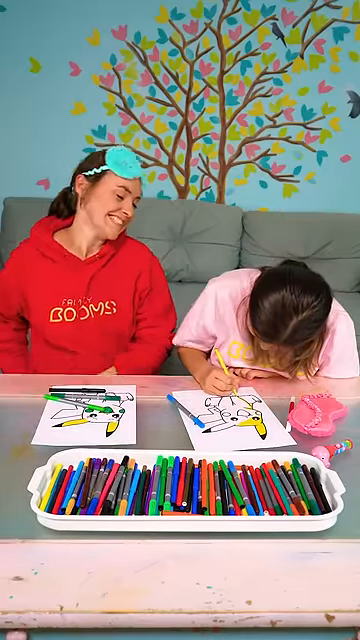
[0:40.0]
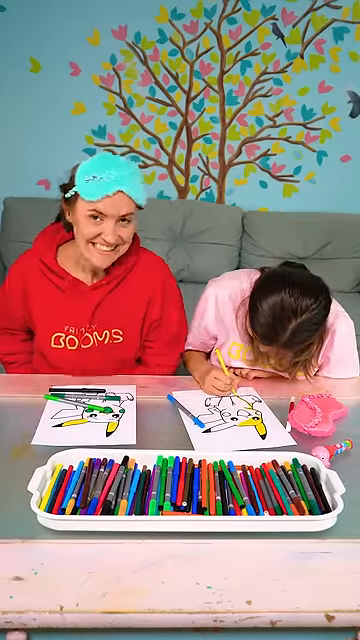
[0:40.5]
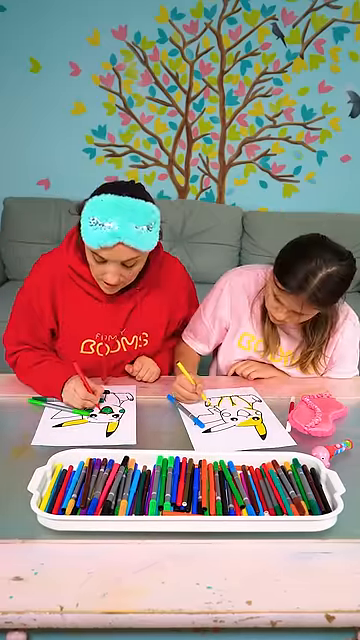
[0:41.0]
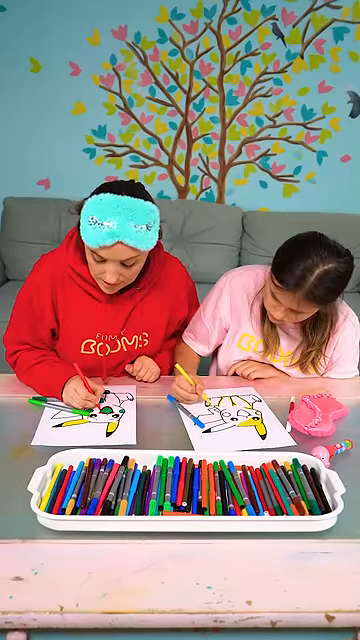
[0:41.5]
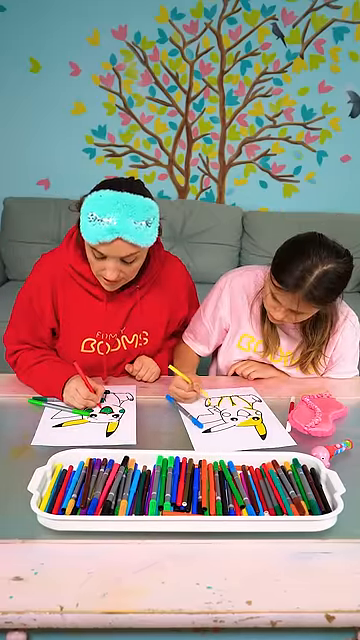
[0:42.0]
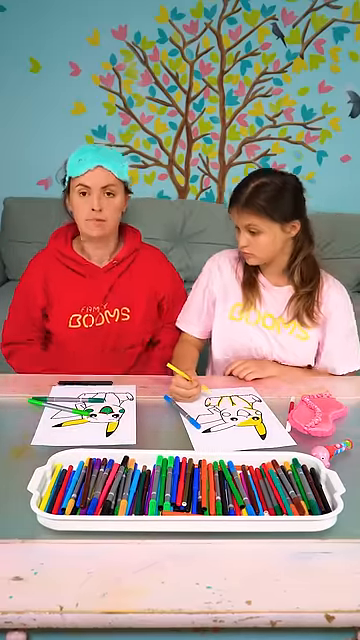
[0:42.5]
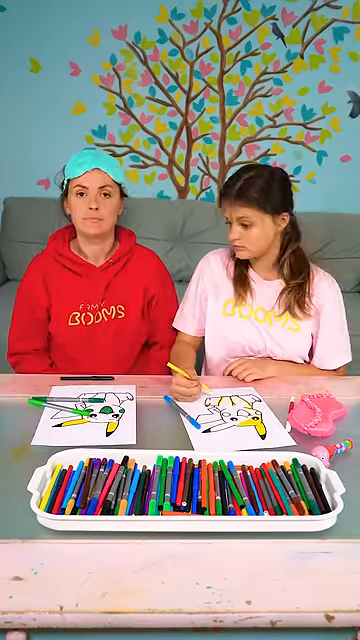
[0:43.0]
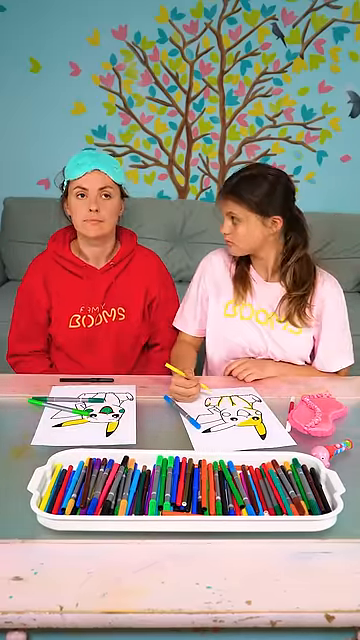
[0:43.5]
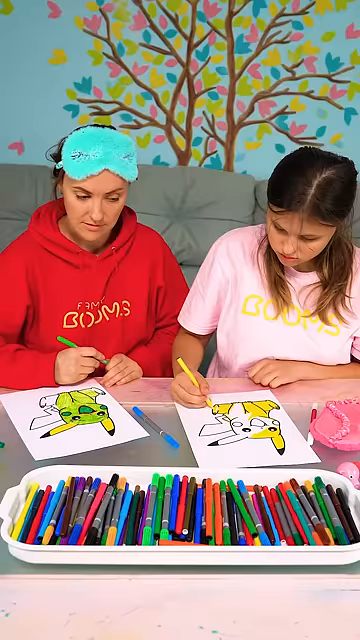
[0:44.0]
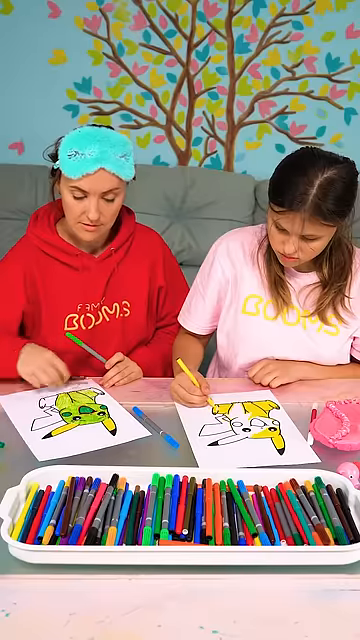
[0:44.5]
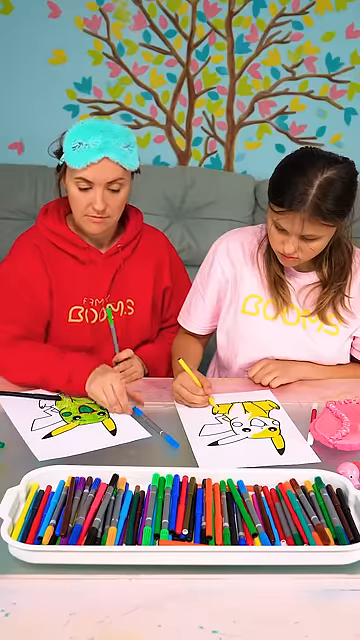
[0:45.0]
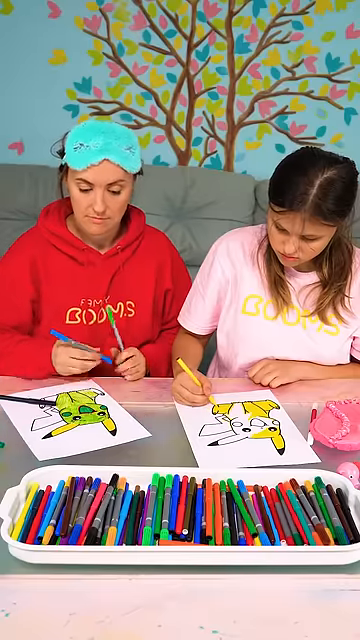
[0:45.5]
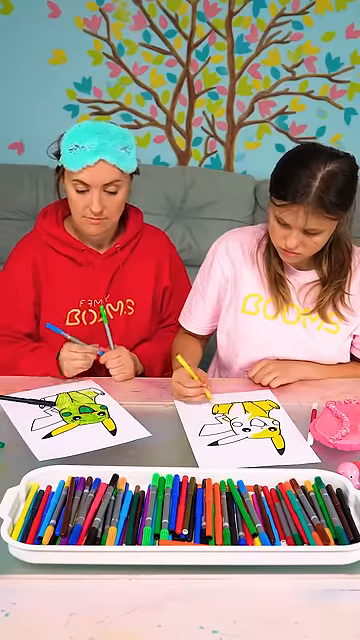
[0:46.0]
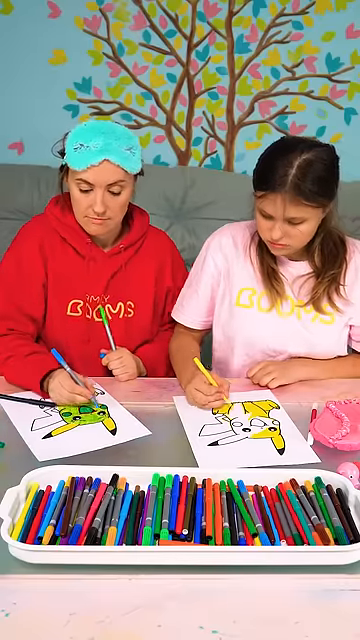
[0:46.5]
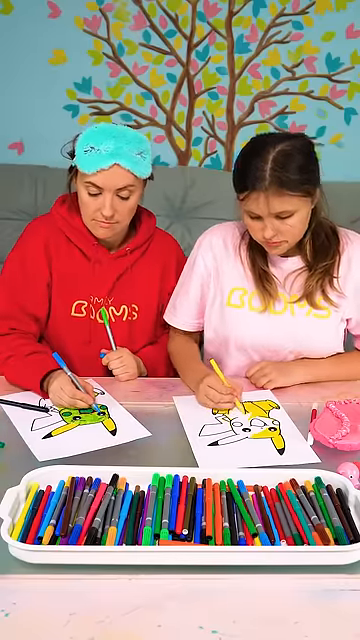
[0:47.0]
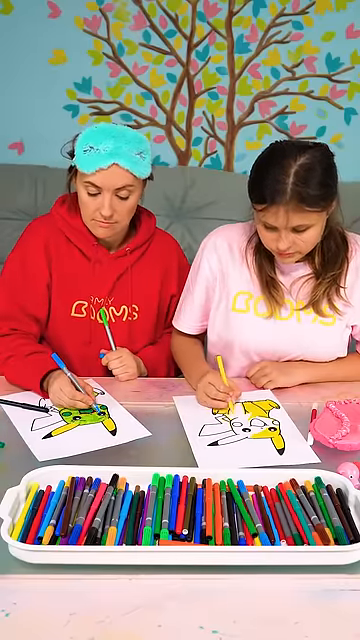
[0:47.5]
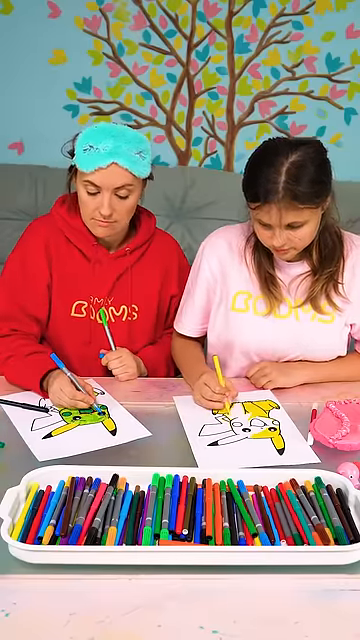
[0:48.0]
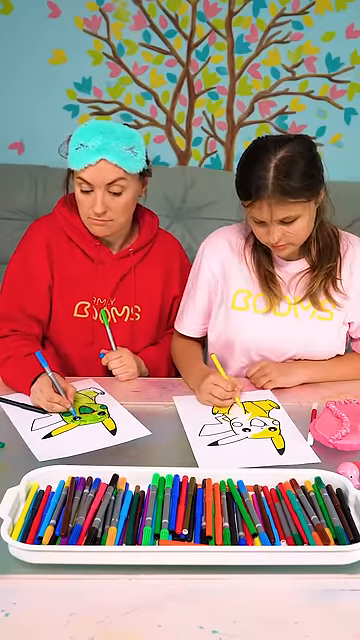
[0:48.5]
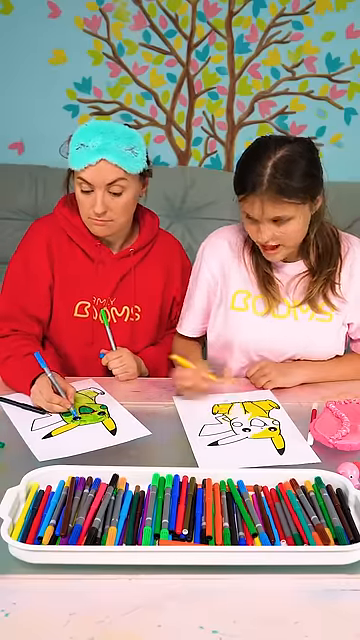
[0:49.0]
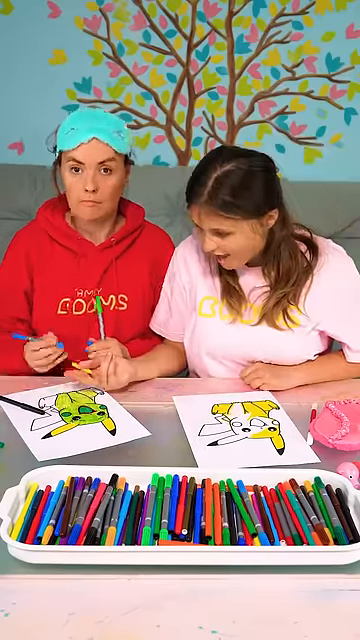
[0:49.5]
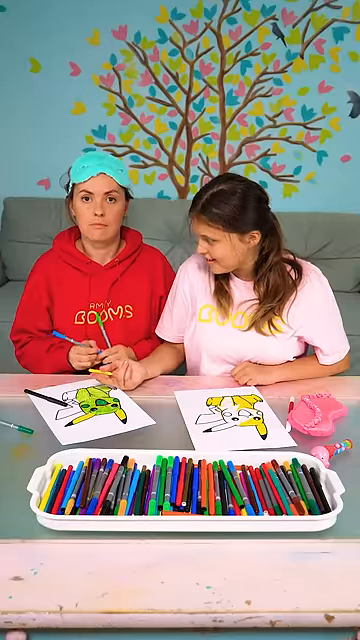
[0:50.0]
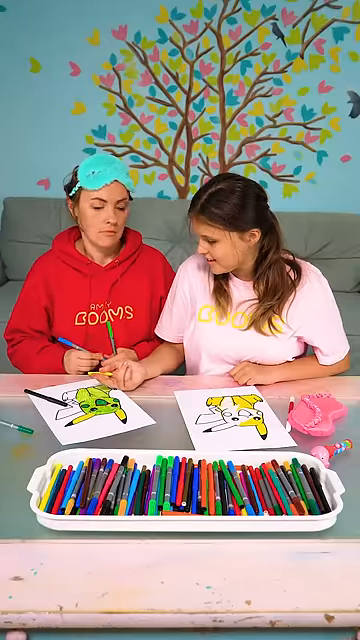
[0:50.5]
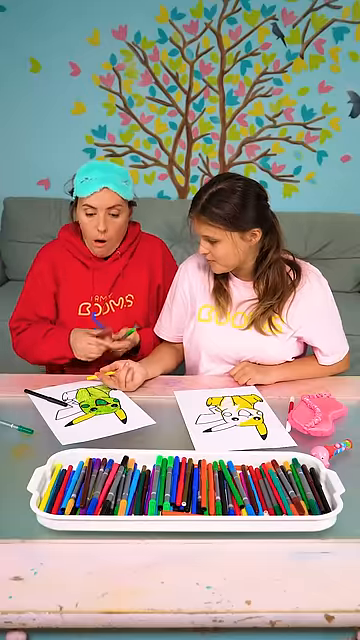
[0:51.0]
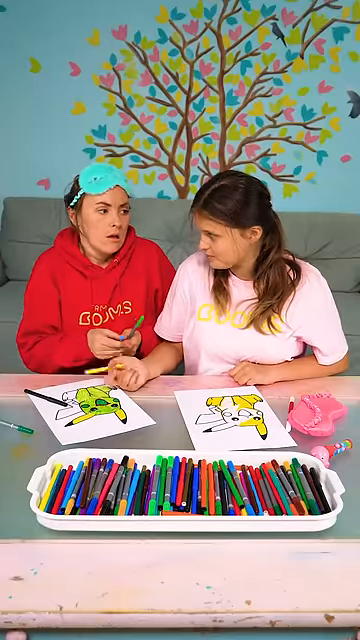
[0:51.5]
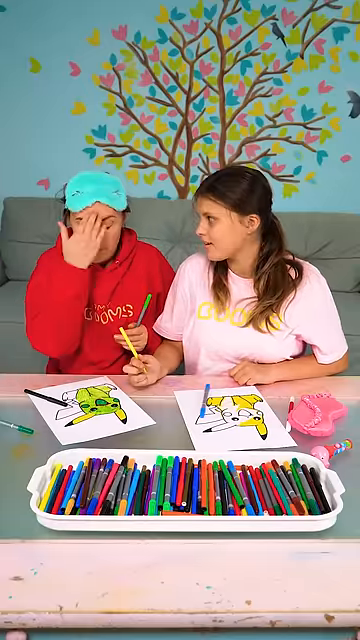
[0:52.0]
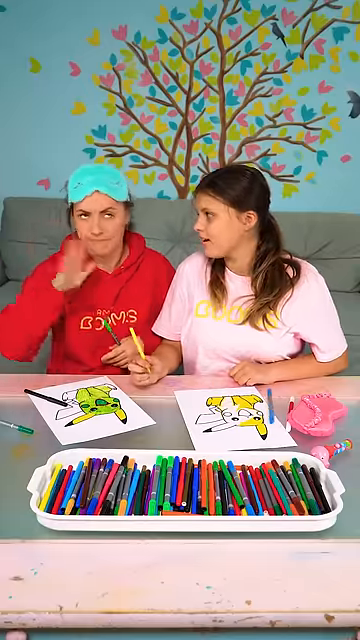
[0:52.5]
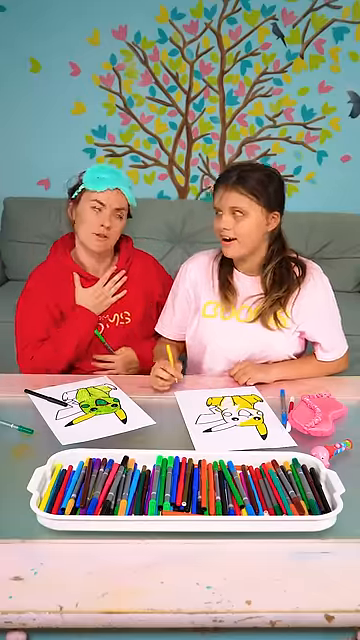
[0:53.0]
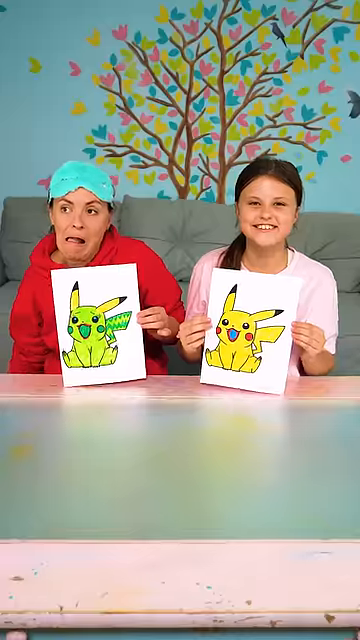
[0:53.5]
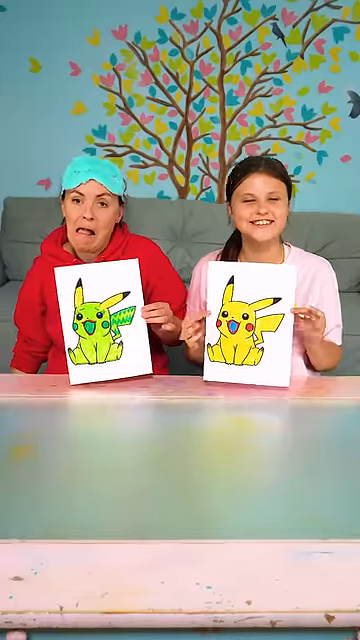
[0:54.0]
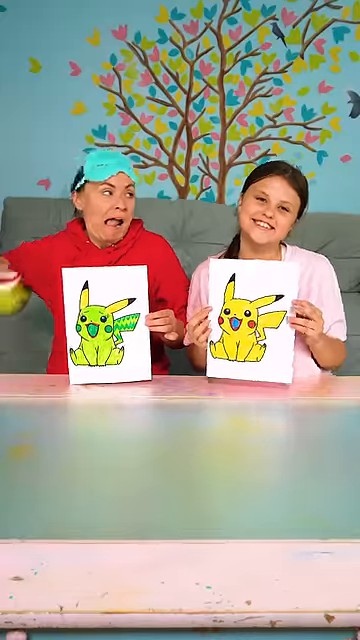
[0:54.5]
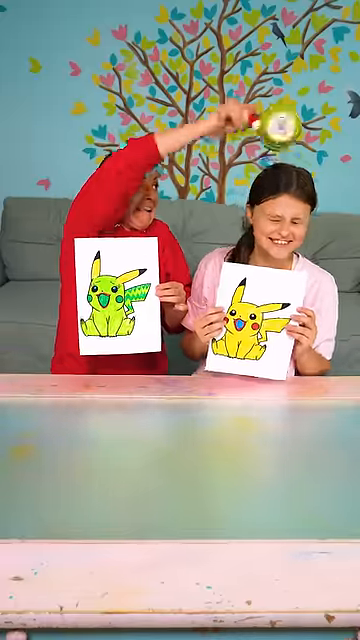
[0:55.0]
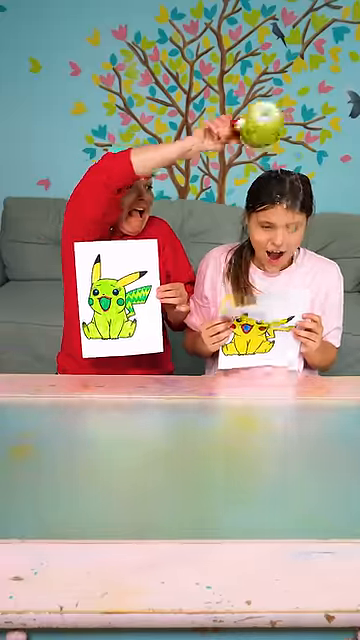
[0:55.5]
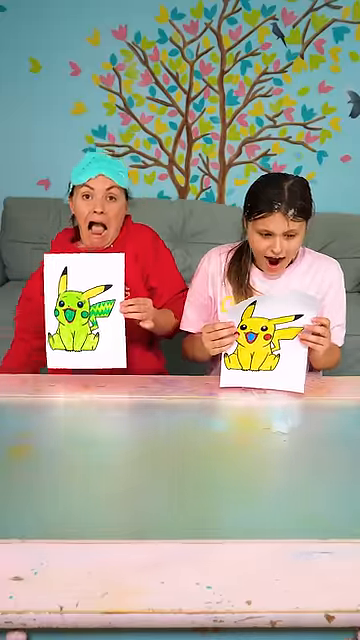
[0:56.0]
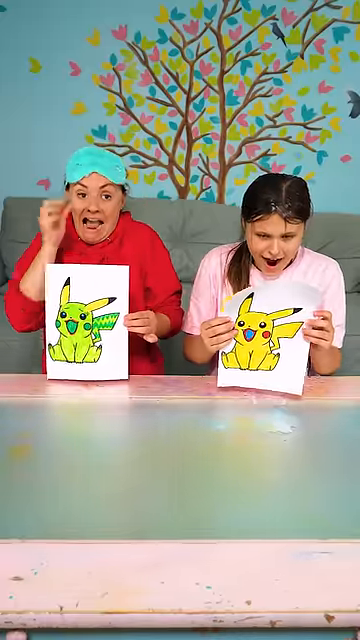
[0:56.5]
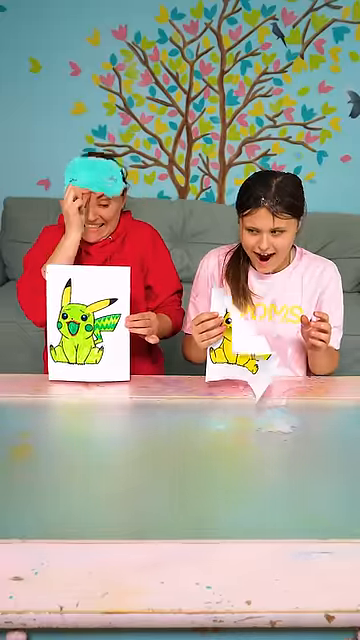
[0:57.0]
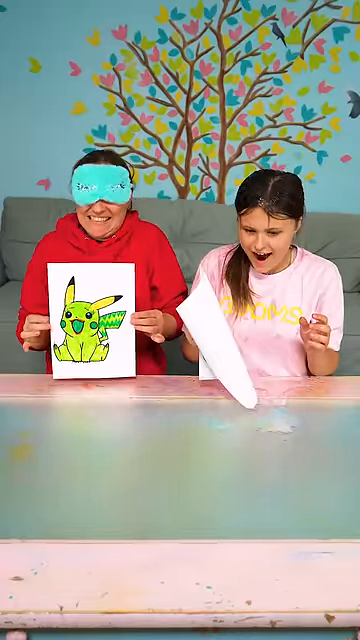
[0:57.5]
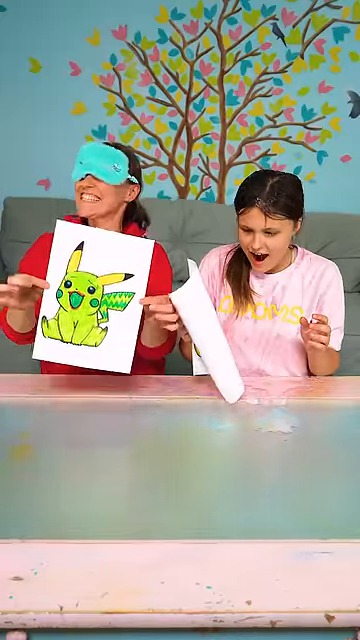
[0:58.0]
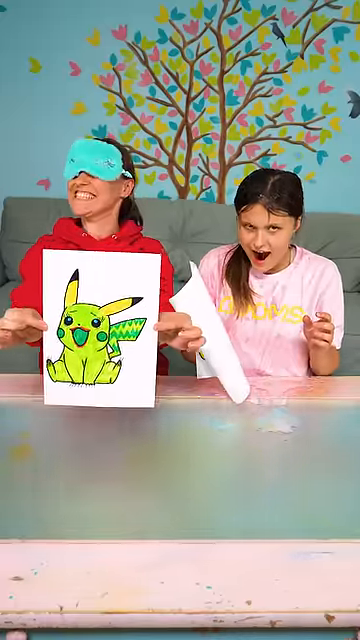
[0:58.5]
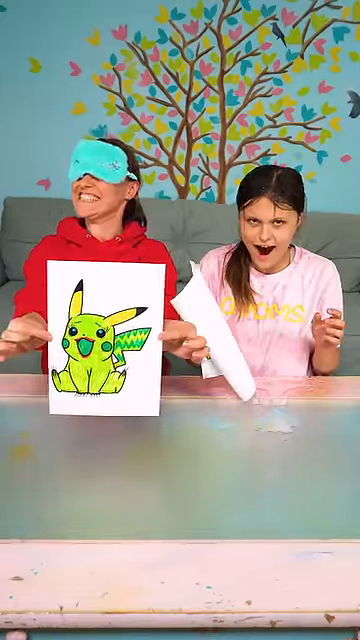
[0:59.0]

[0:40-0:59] The girl and the woman continue drawing. The woman sits back, revealing that she has begun to fill in some of Pikachu's body with a green marker. The girl looks back and forth at her as the woman keeps coloring Pikachu green, then looks over and says something. The woman in red makes a lot of gestures, like an "I forgot" or "it was an accident" kind of movement, almost as if apologizing. They both hold up their Pikachu drawings and smile at the camera. The girl's Pikachu looks like it has a blue mouth, and the woman's Pikachu is yellow on top with the rest of the body colored green. As they smile at the camera, the woman holds a large Grinch-themed coffee mug of water over the girl's head and dumps the water on top of her head. The girl in pink has her mouth open in surprise while the woman in red laughs at her being wet. The girl holds her drawing out in front of her, and the woman in red puts her blue blindfold back down over her eyes and holds her drawing closer to the camera while smiling.